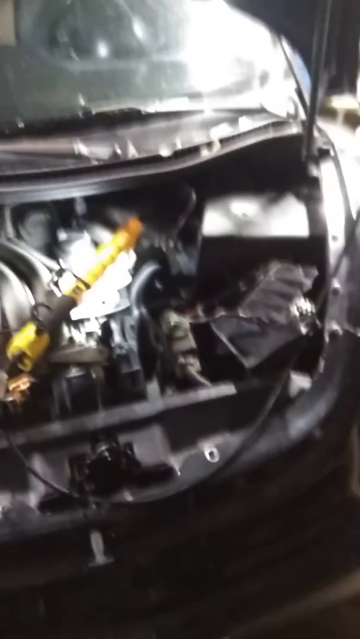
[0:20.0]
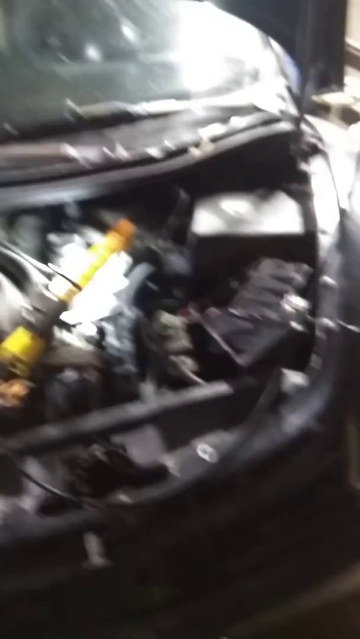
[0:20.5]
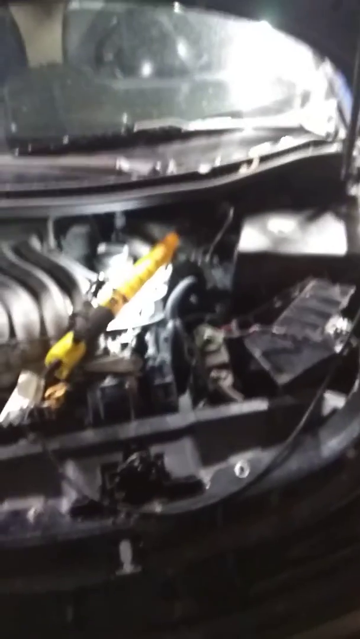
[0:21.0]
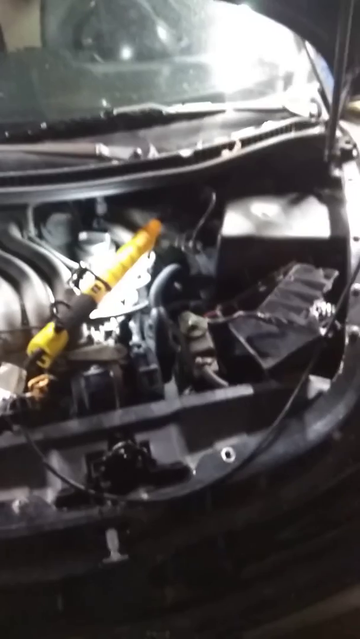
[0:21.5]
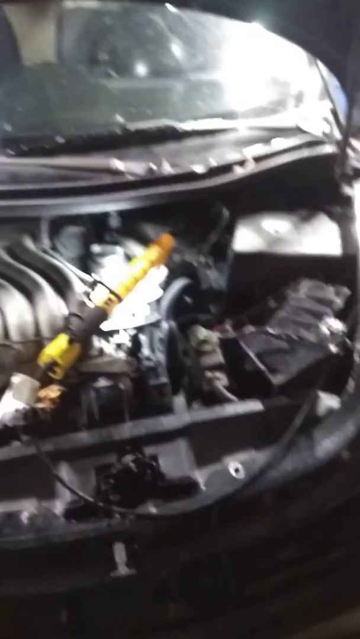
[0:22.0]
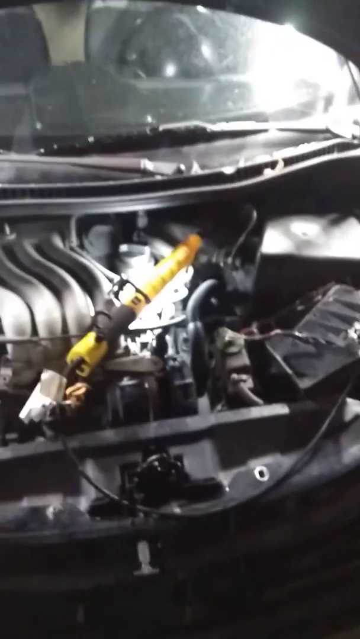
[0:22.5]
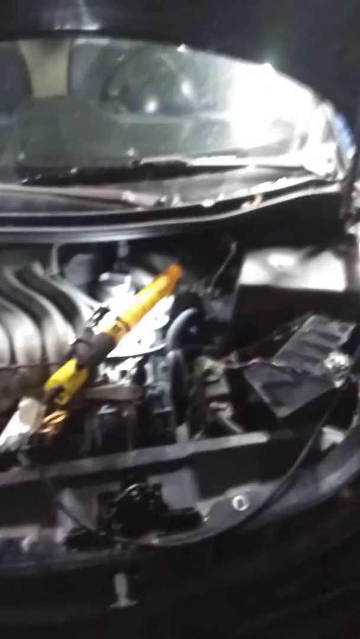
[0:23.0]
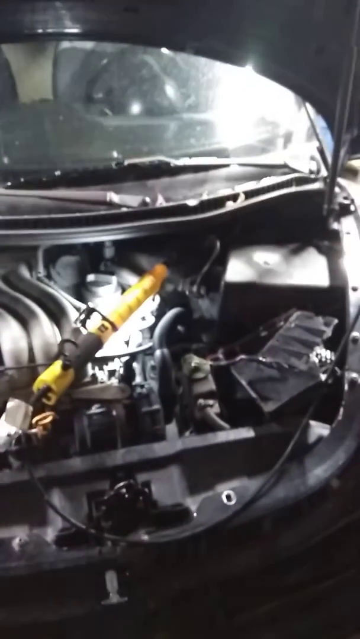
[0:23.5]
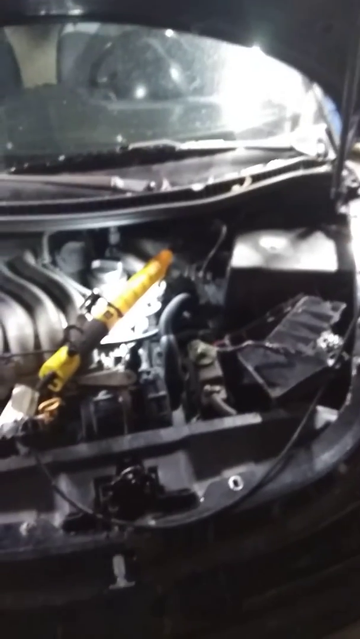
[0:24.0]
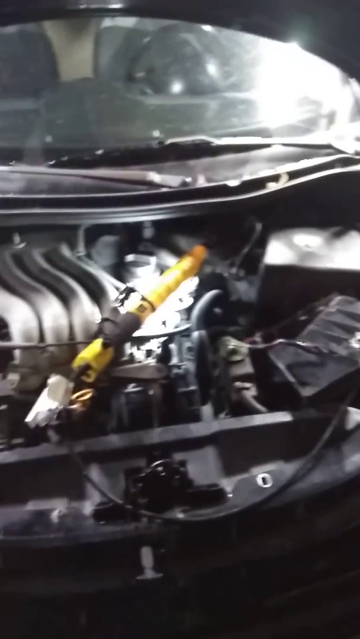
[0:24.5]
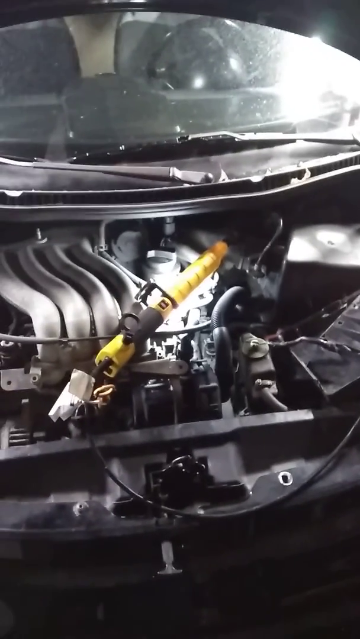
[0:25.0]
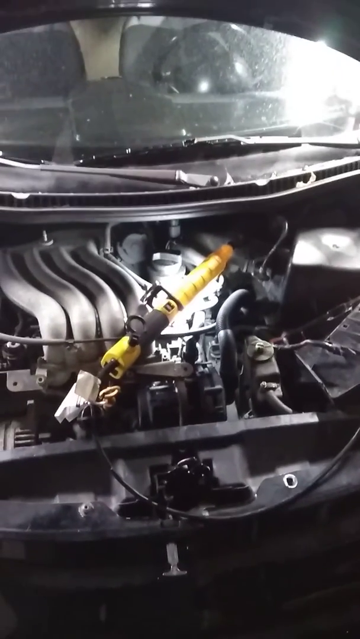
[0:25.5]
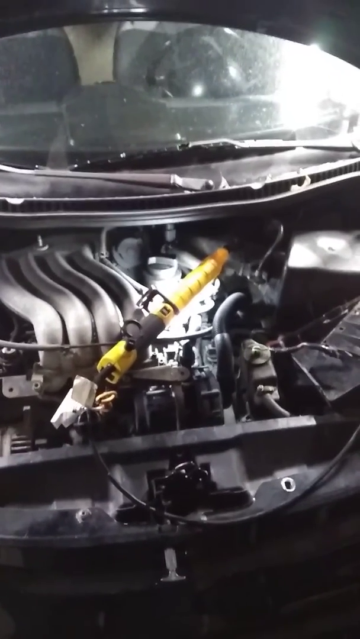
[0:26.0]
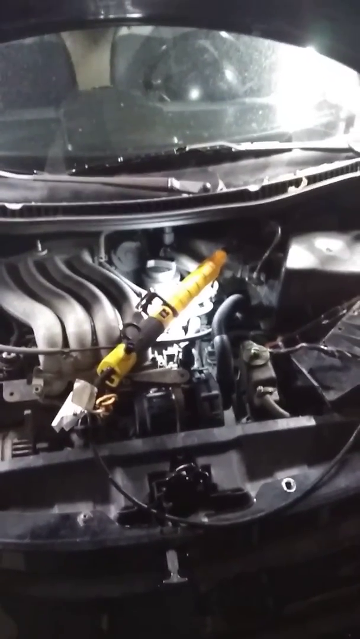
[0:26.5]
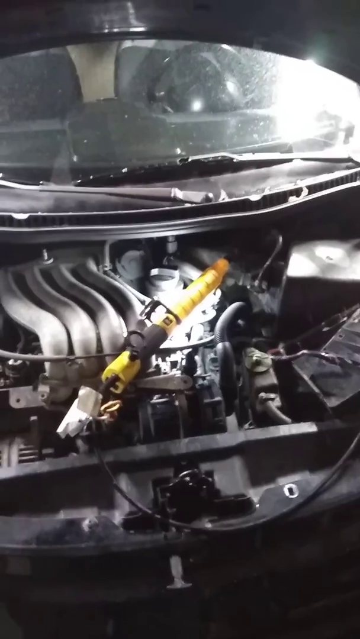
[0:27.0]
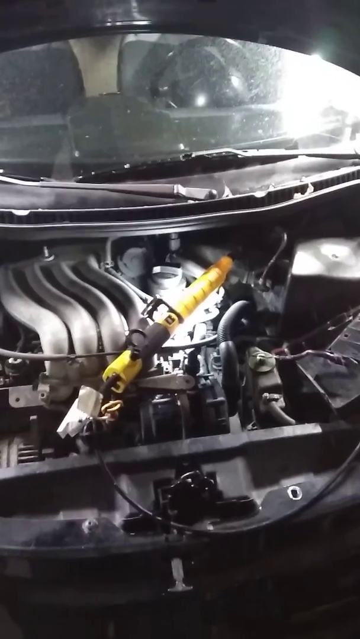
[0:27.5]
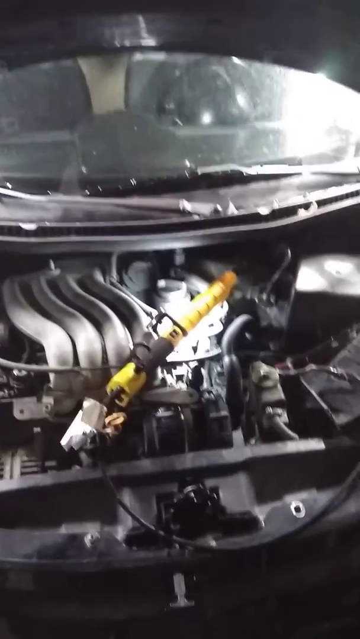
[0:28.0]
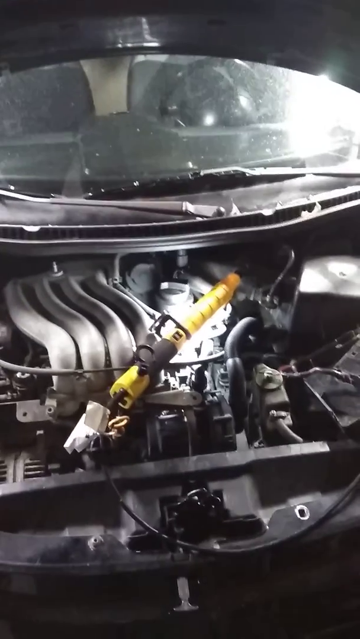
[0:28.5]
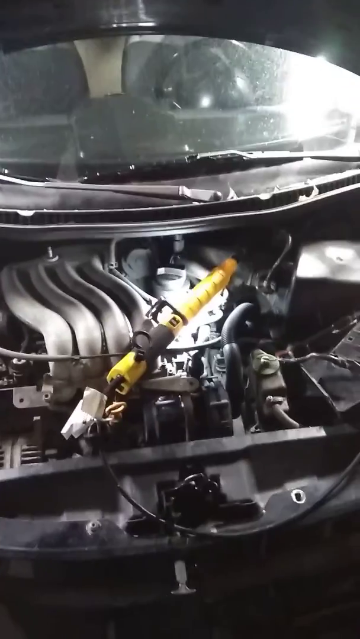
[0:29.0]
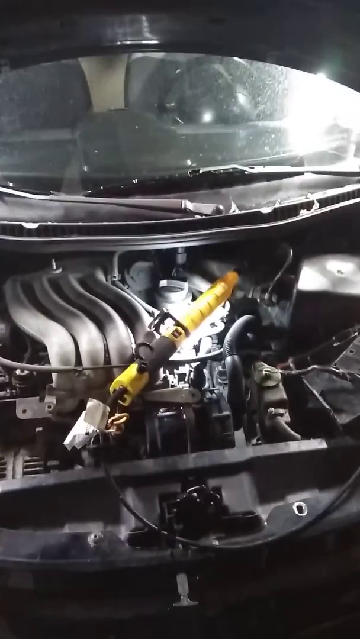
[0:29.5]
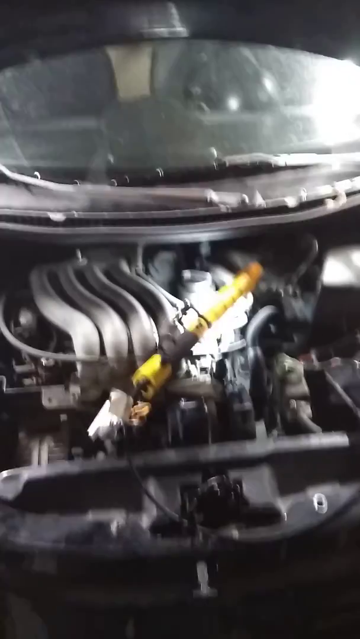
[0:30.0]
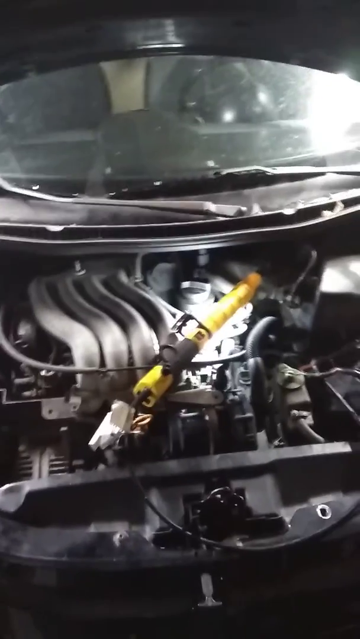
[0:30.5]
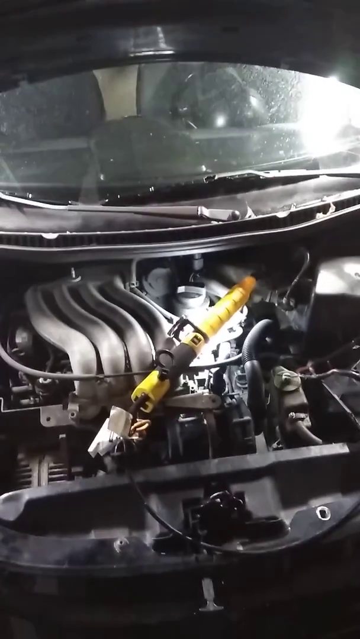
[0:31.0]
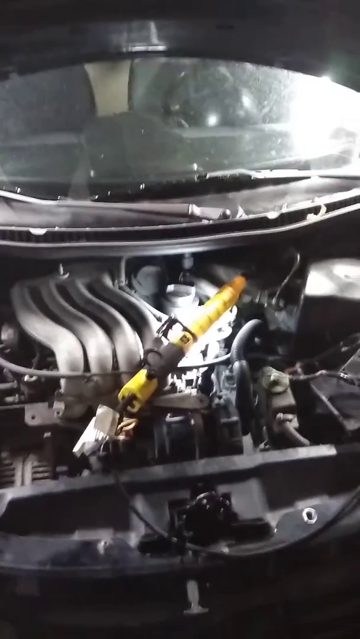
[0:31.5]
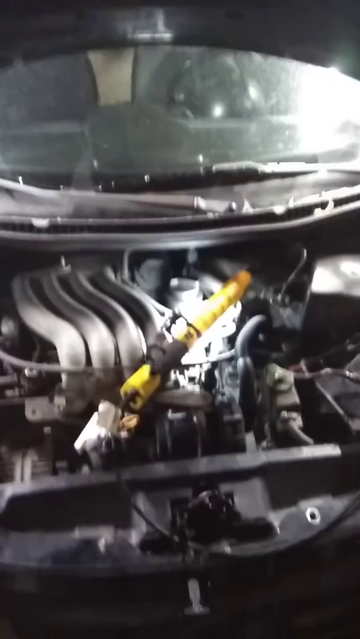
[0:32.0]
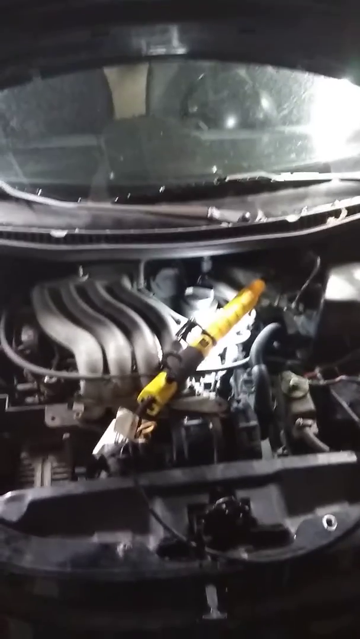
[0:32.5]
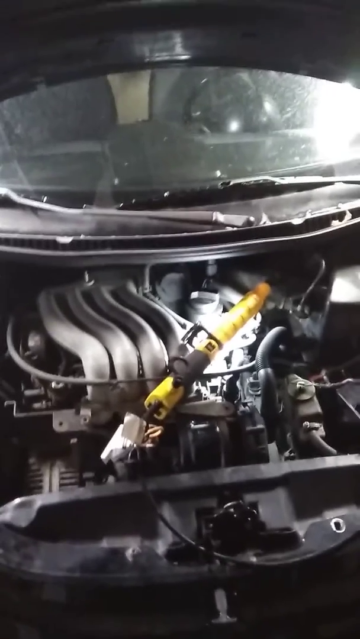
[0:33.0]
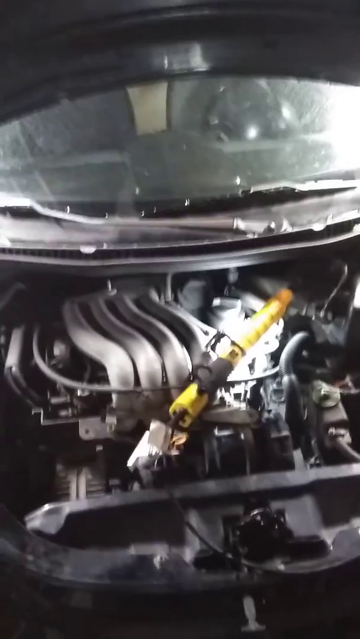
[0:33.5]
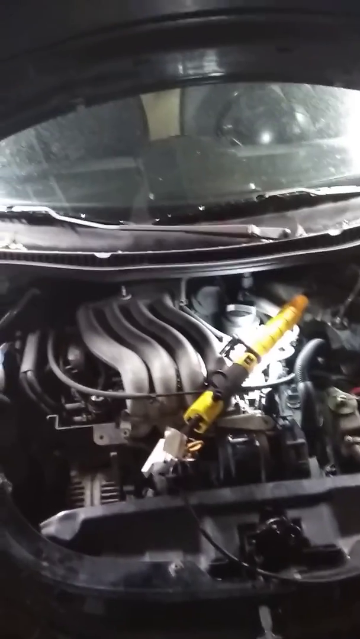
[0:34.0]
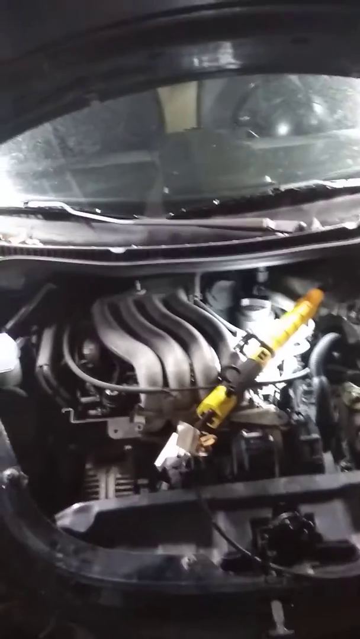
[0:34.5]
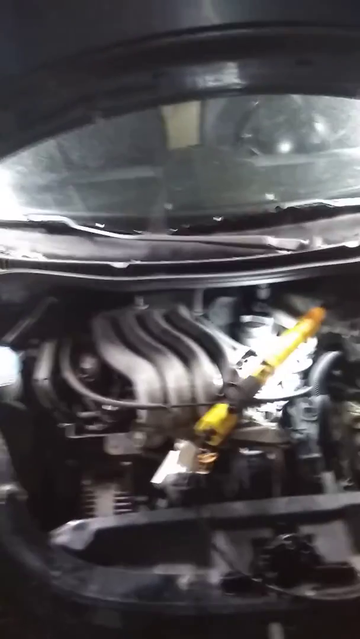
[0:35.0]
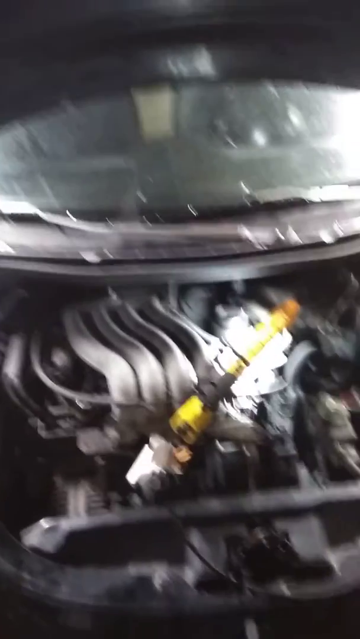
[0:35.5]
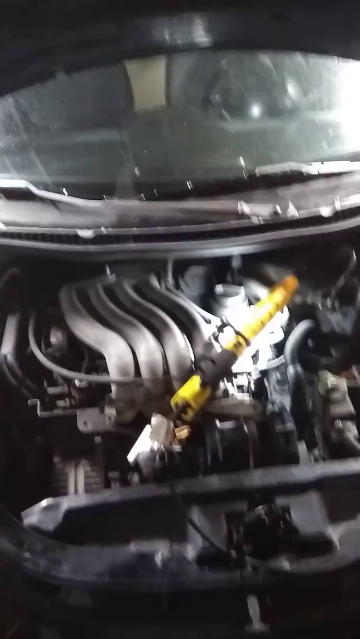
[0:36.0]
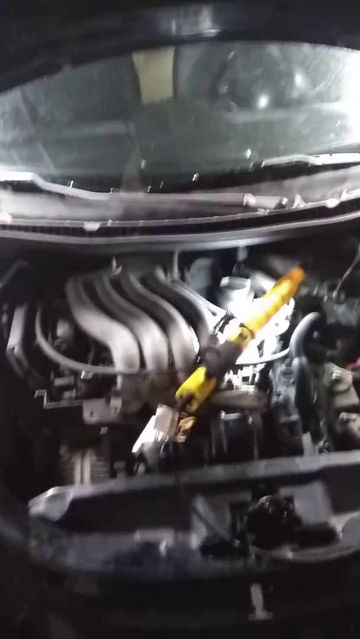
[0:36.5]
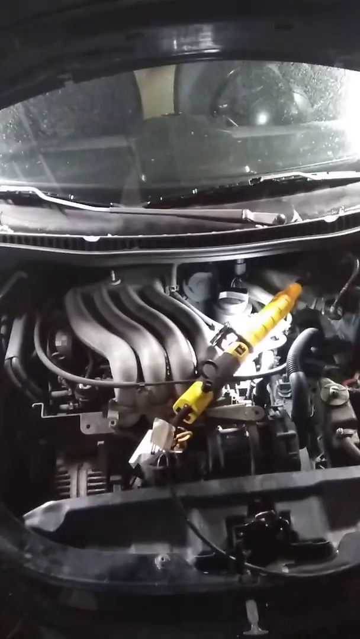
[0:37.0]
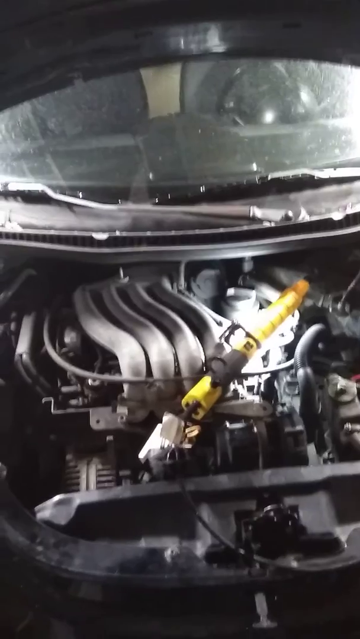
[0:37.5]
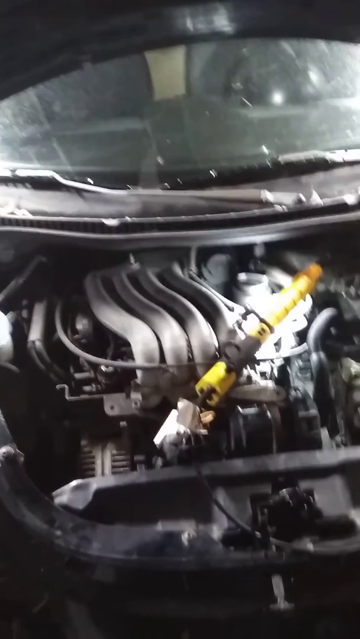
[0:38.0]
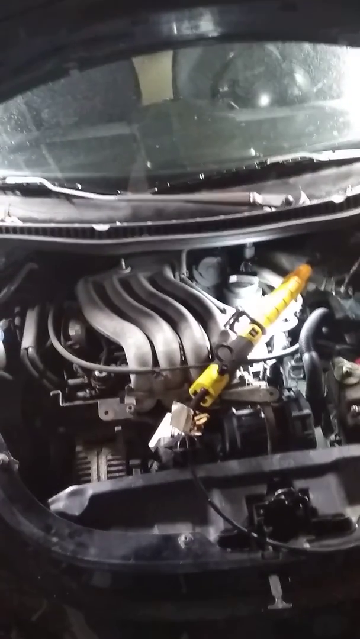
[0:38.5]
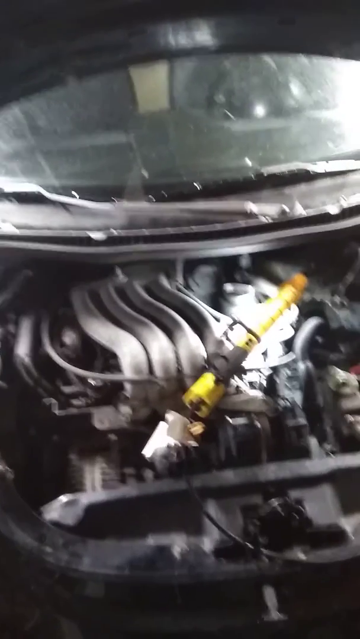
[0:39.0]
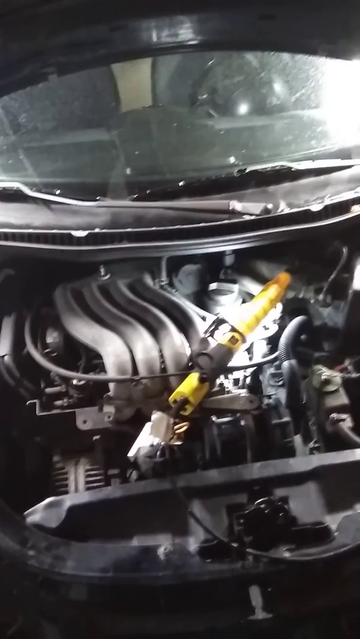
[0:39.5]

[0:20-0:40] The camera stays on the engine, looking down into it. In the upper left of the engine there are sort of curved metal shapes, and at the top right there is a grey box. On the left-hand side are four curved tubes, almost like exhaust tubes, which appear to take something from the engine, maybe water, air or fuel. At the bottom right of the image is a small circle with a black hole inside it, which appears to be where the bonnet closes and attaches to the bottom of the car. Looking a little toward the left of the engine, at the bottom left there is a small grid: a grey square with ten small black holes in a horizontal grid pattern. At the top of the image is what appears to be the windscreen wiper at the bottom of the windshield, with its central fulcrum in the middle of the screen.